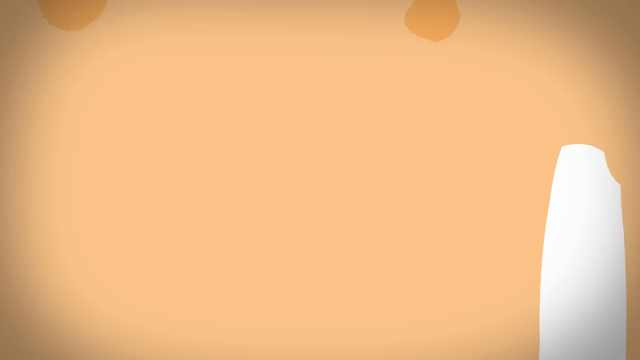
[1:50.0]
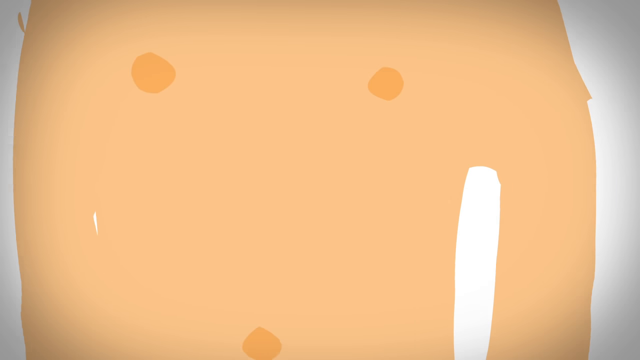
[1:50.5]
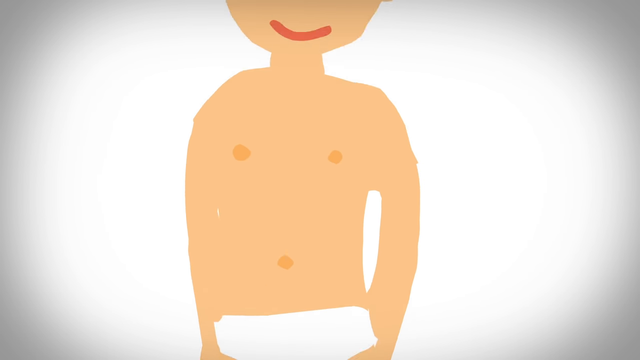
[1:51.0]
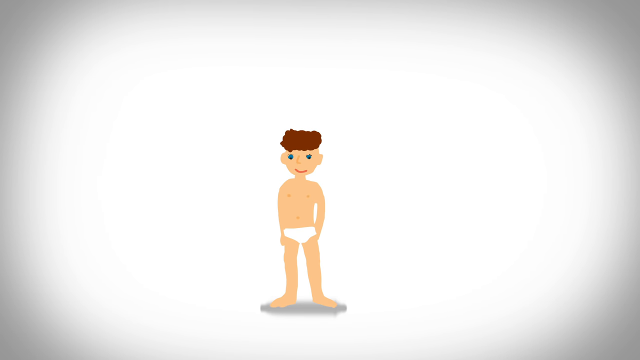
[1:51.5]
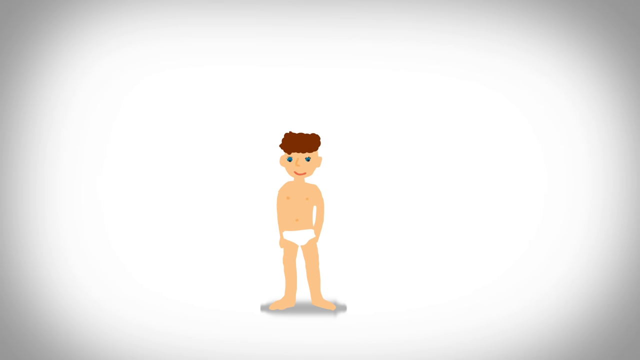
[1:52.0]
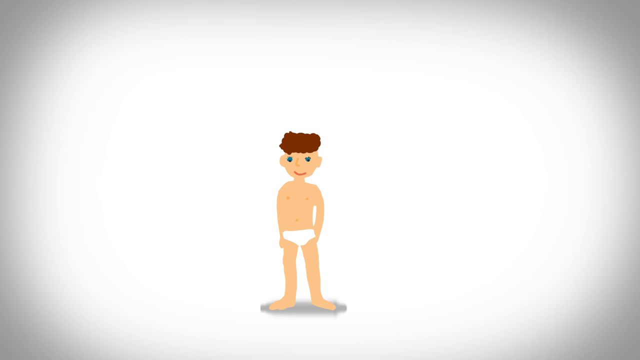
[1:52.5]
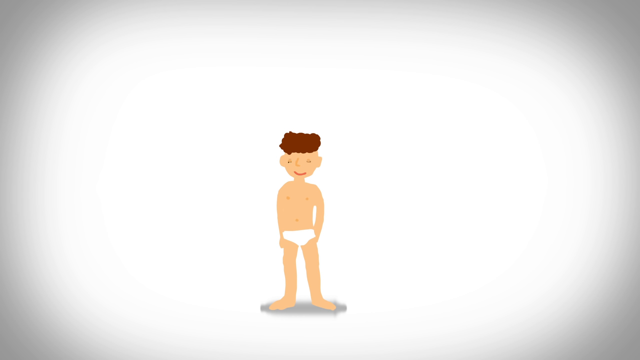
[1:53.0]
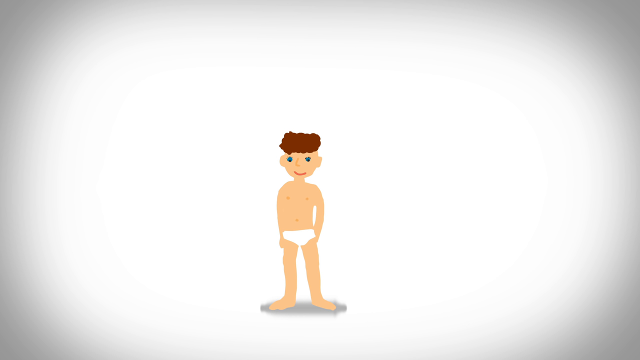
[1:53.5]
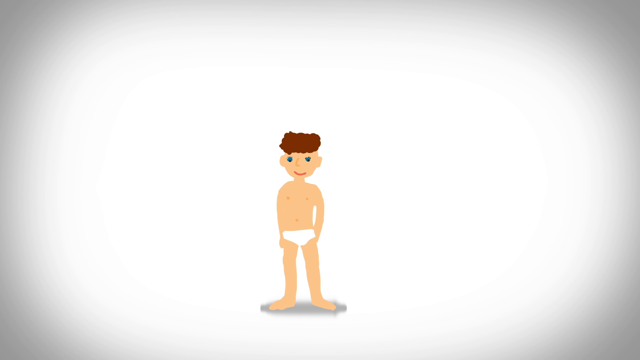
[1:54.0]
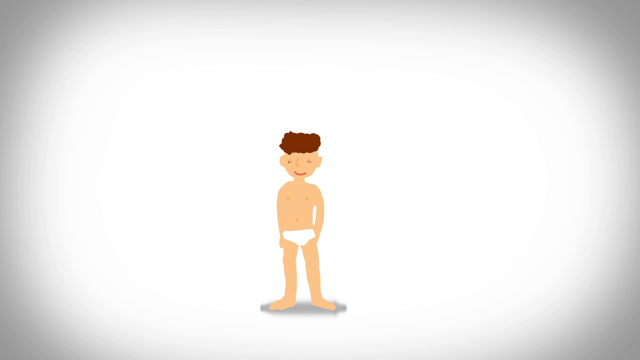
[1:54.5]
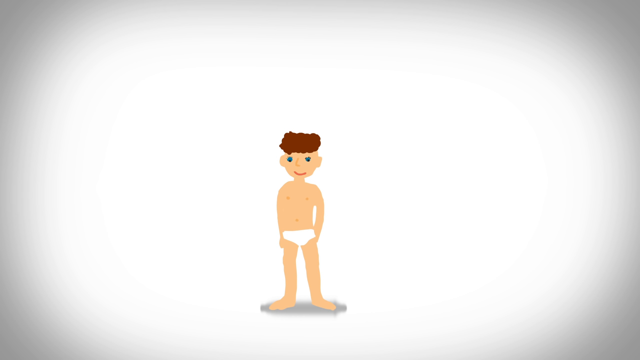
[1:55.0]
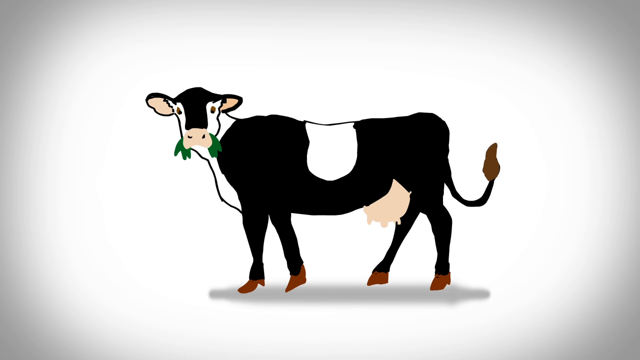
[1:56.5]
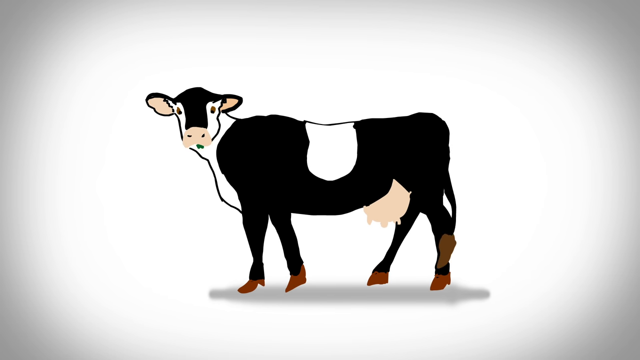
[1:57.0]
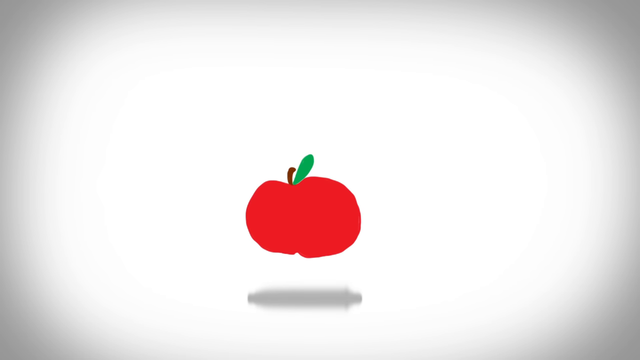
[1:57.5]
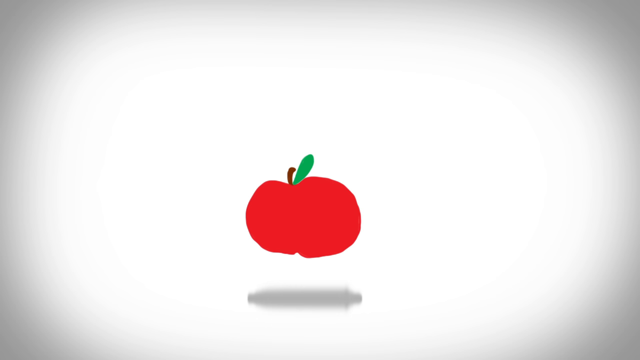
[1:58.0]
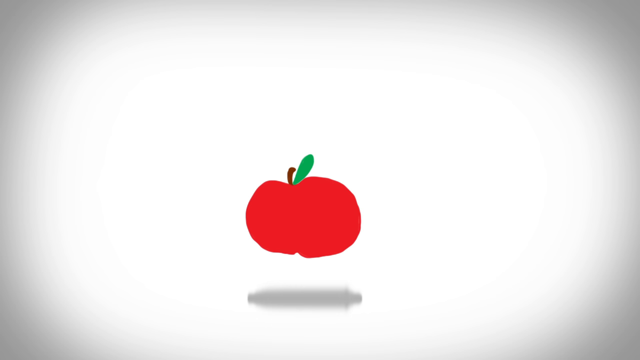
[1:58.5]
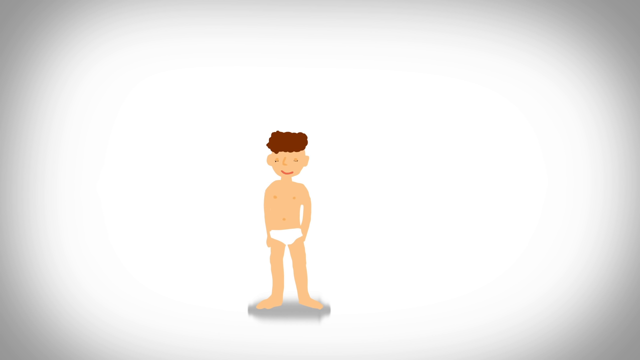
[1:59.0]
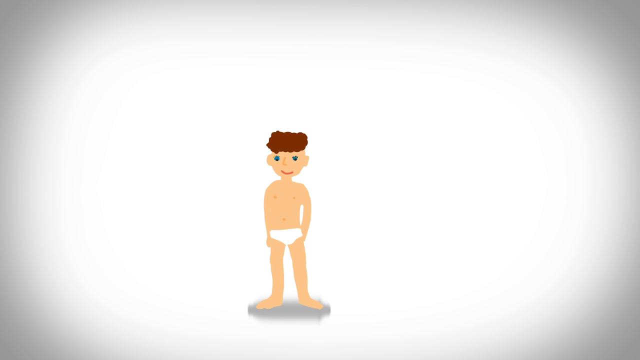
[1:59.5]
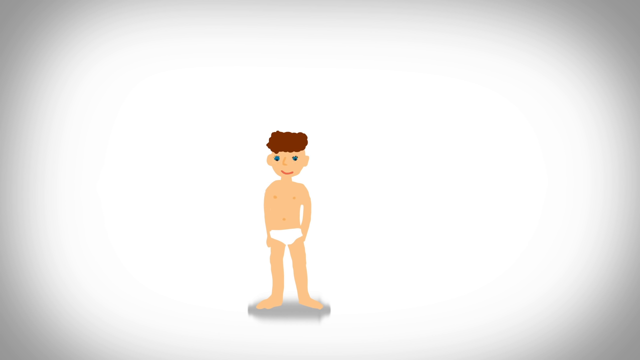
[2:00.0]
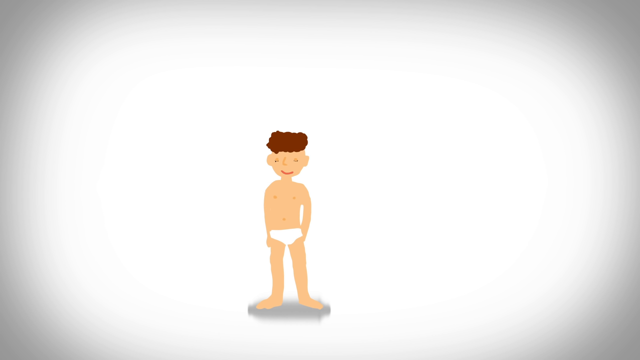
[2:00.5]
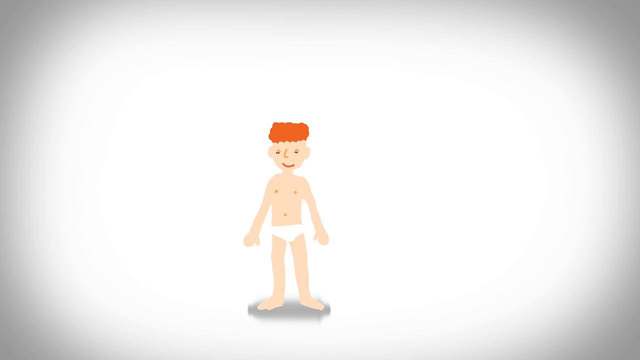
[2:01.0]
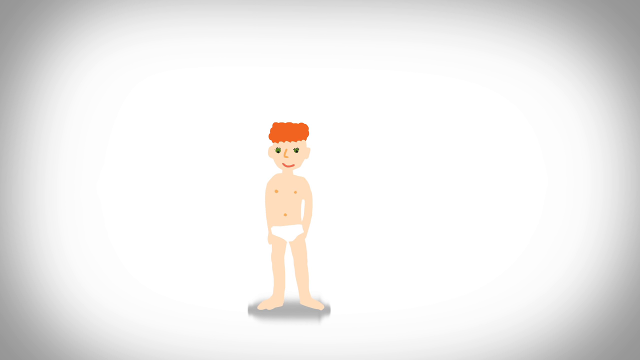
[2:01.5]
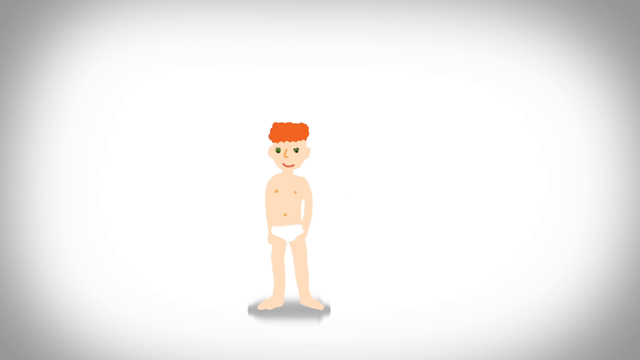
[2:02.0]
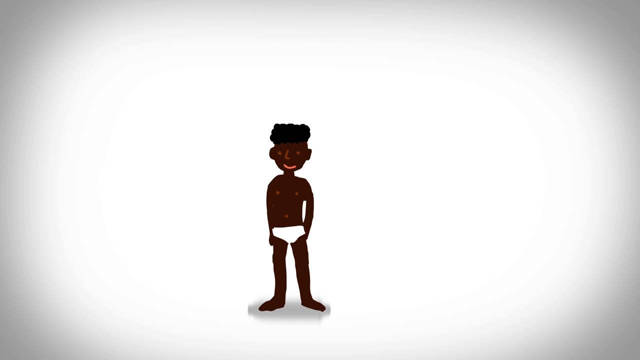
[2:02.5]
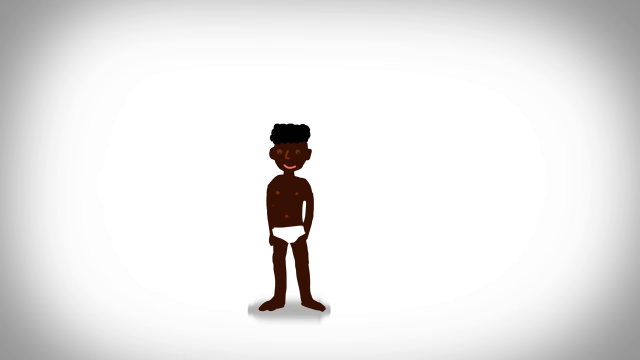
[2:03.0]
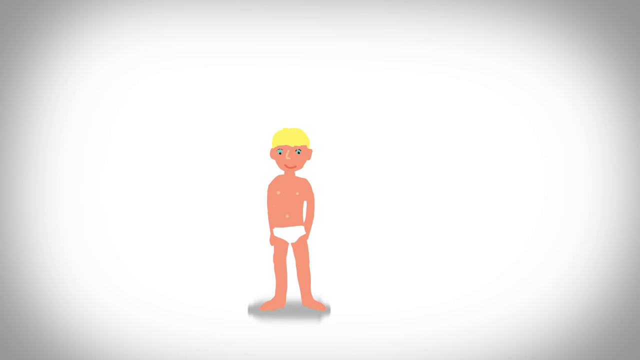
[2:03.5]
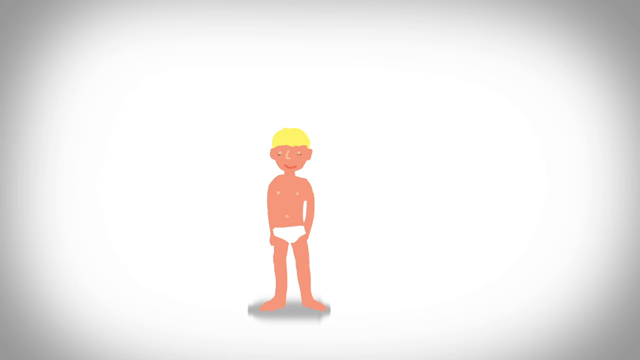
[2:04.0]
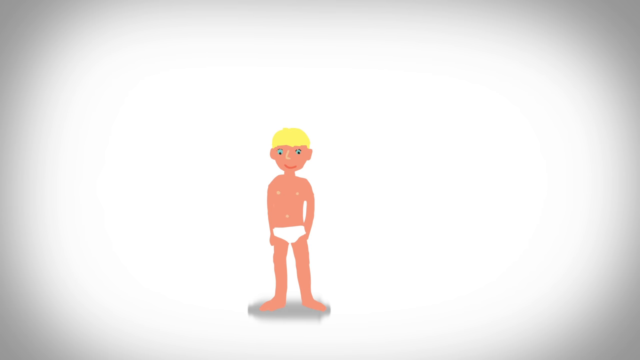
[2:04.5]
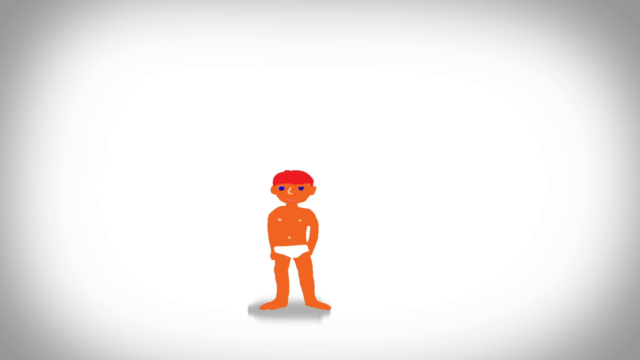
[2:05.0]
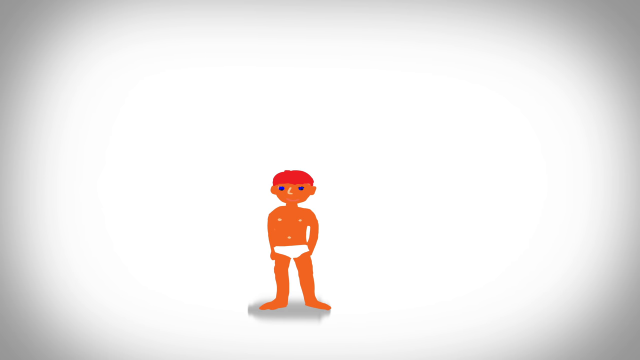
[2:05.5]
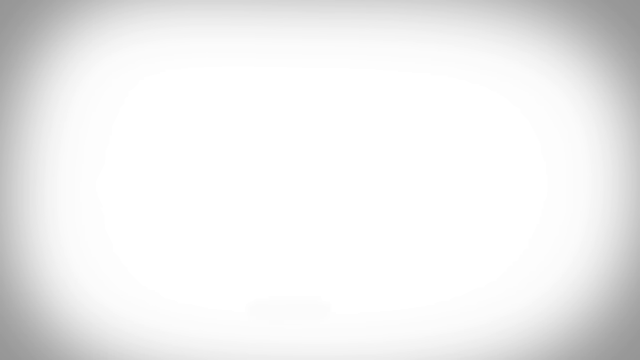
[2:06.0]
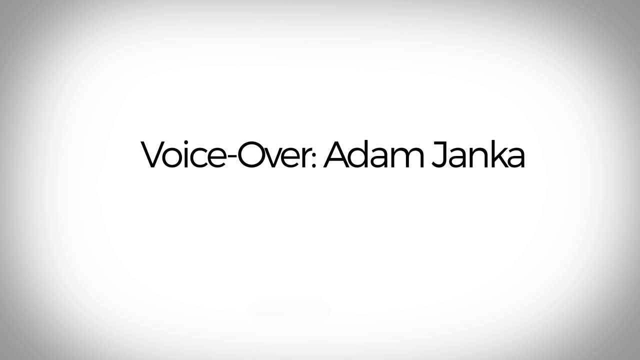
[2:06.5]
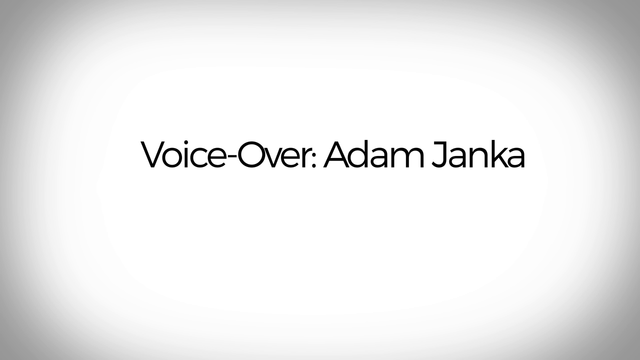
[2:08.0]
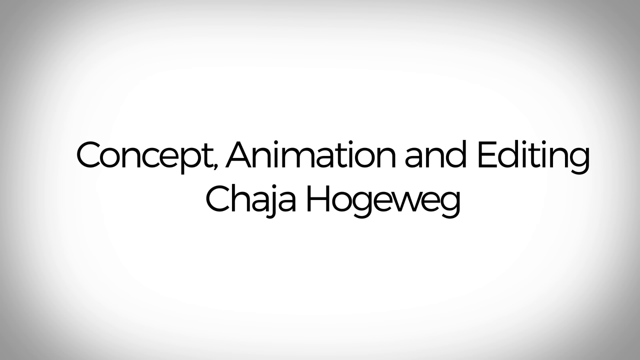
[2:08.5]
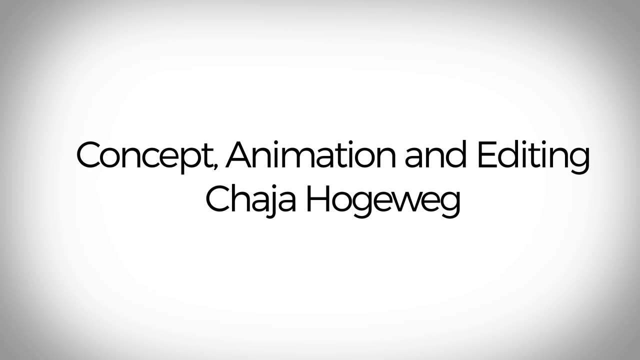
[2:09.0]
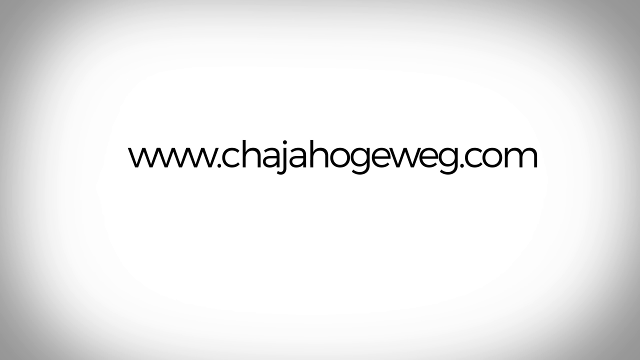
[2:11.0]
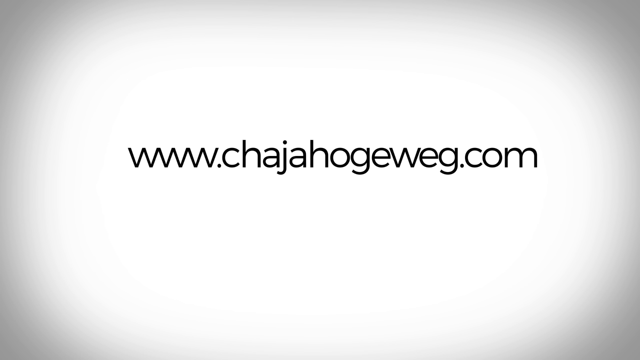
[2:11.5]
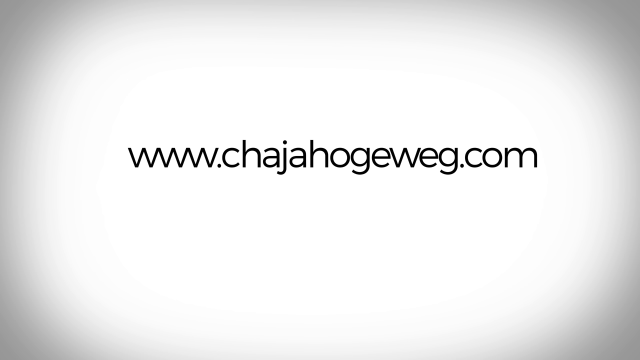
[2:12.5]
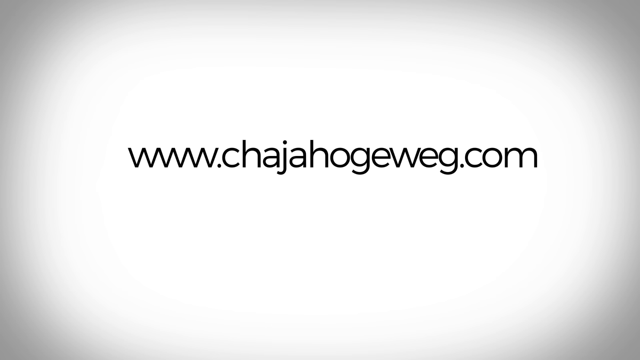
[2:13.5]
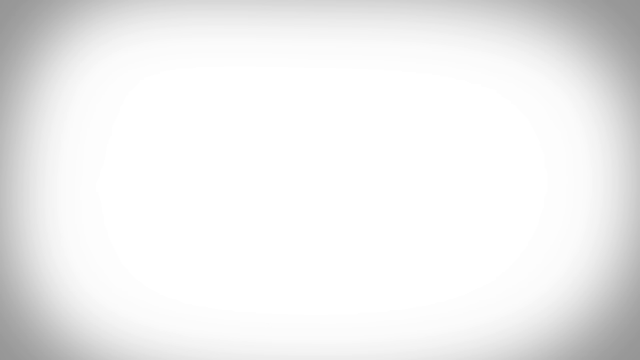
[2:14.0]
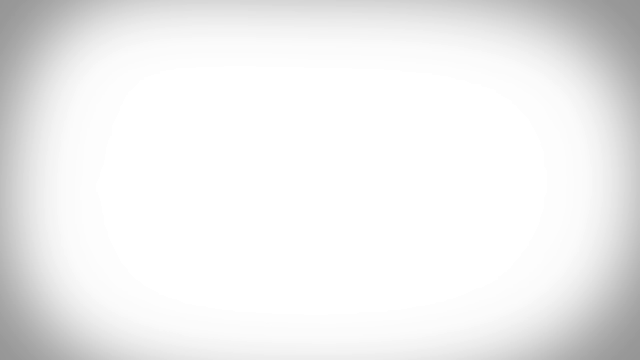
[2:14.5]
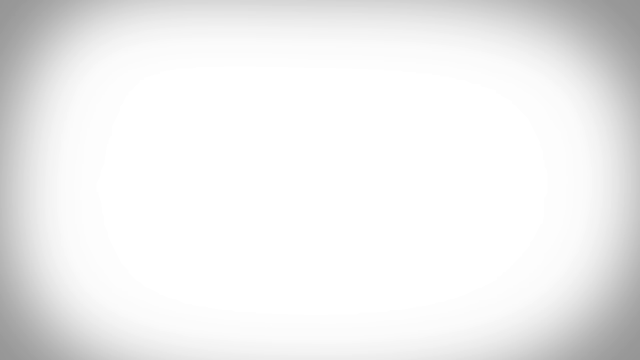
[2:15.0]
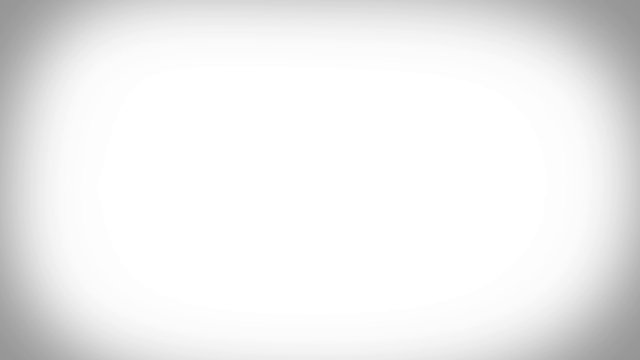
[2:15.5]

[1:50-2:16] A peach-colored screen zooms out to reveal that the peach color is the skin of a boy, with two dark circles for his nipples and one for his belly button. It zooms all the way out: he stands facing the camera with his arms at his sides. He has blue eyes and brown hair, wears white underwear, and has a shadow underneath him. His eyes blink and he has a smile on his face. Then a drawing of a black and white cow is shown, its head toward the left side of the screen but looking at the camera. It switches to a red apple with a green leaf coming off it, then back to the boy. Next comes another boy with lighter skin, green eyes and orange hair in his underwear, then a black boy in his underwear; all the underwear is white. Another white kid with blonde hair and blue eyes follows, and then the images switch quickly back and forth between kids of different heights and colors. A white screen then says "voiceover Adam Janka", followed by "concept animation and editing" and "Chaja Hodgeweg". Finally, a screen says "www.chajaweg.com".